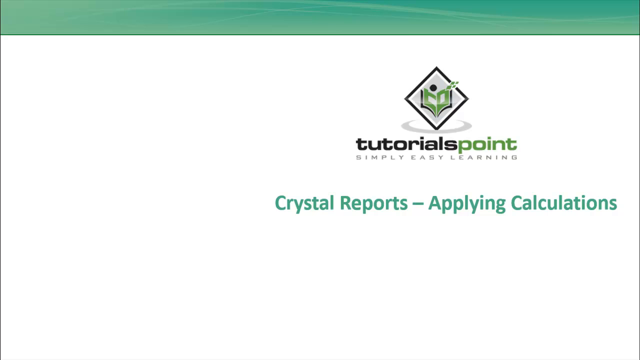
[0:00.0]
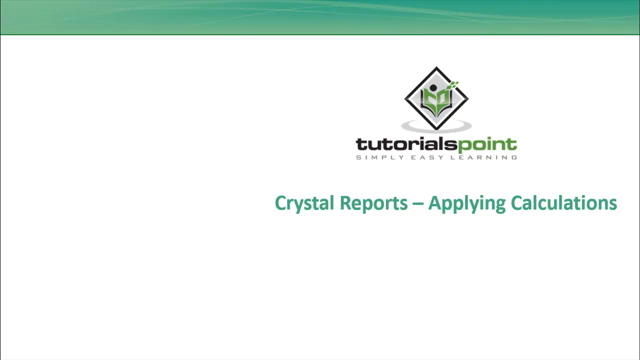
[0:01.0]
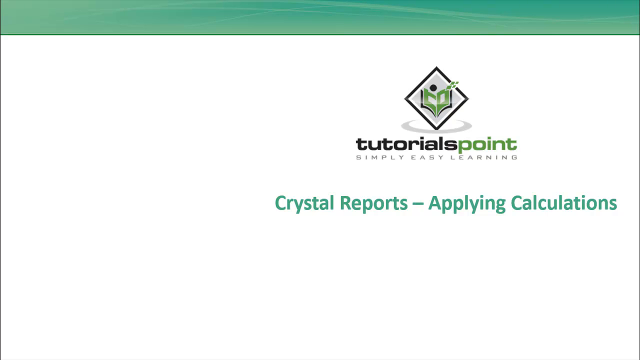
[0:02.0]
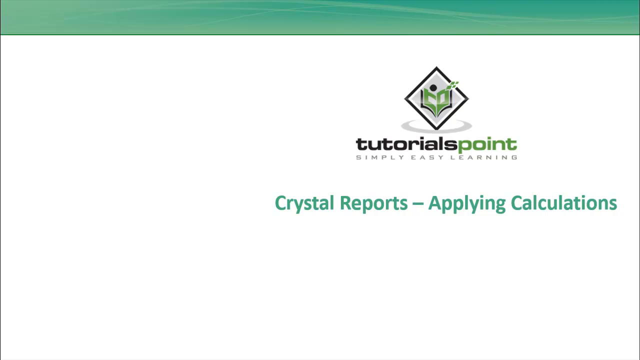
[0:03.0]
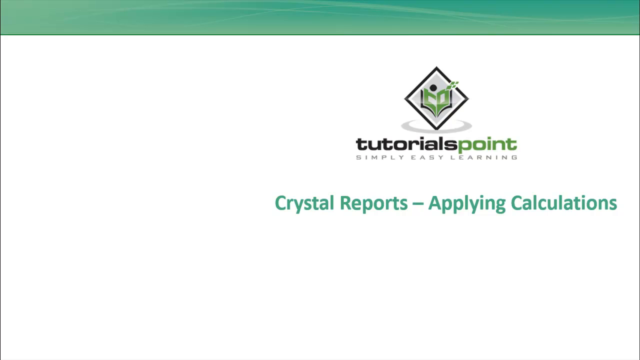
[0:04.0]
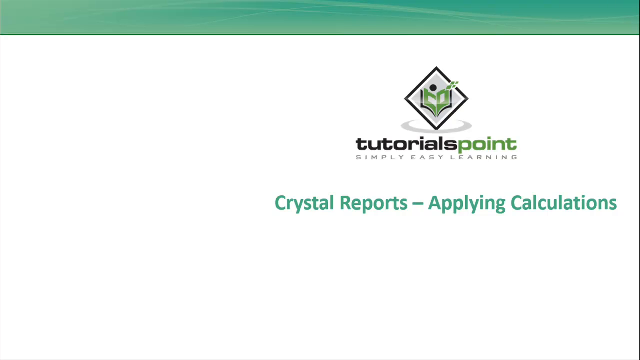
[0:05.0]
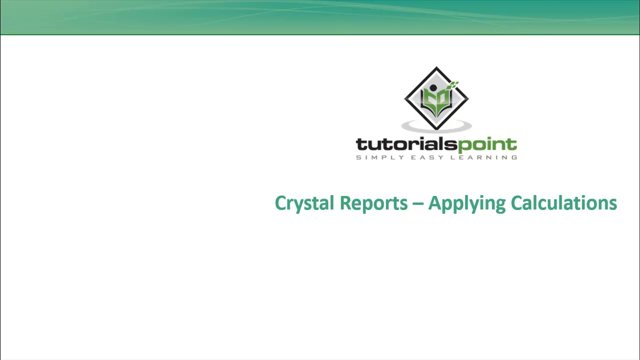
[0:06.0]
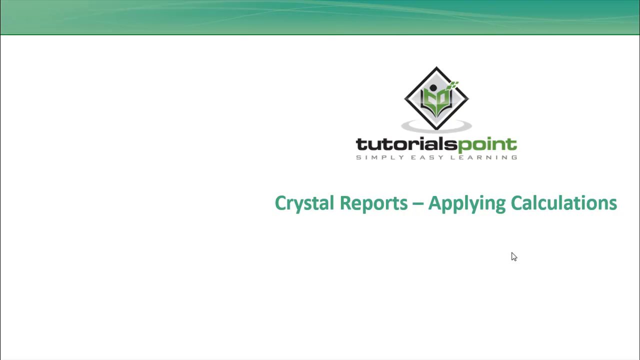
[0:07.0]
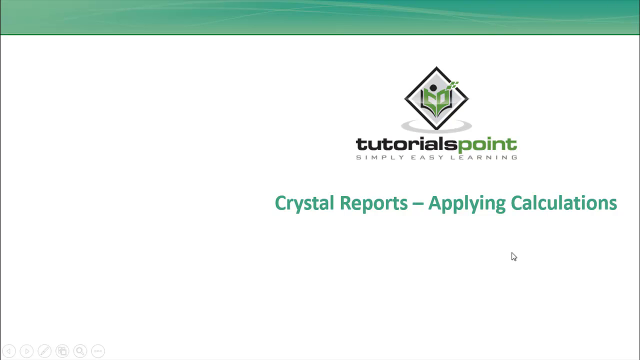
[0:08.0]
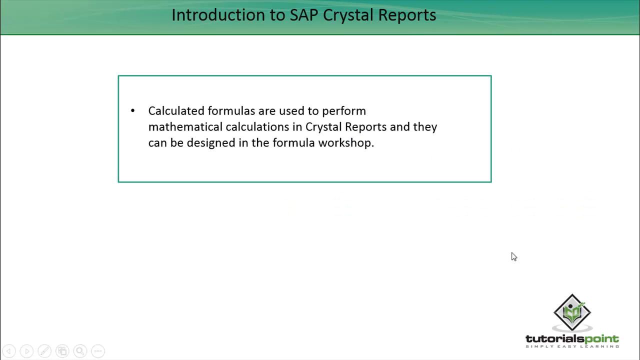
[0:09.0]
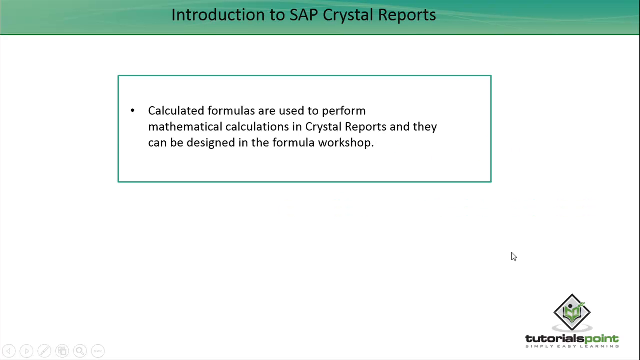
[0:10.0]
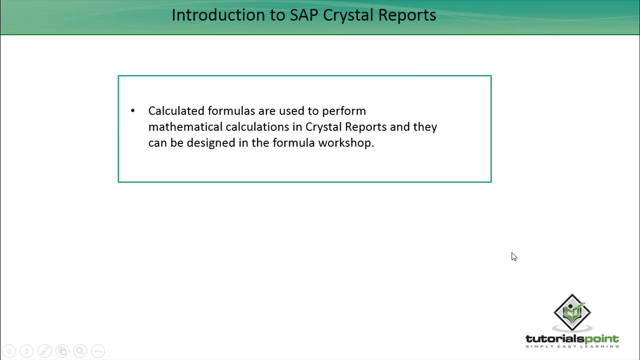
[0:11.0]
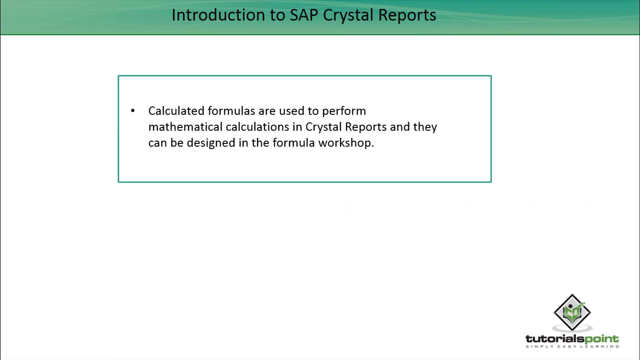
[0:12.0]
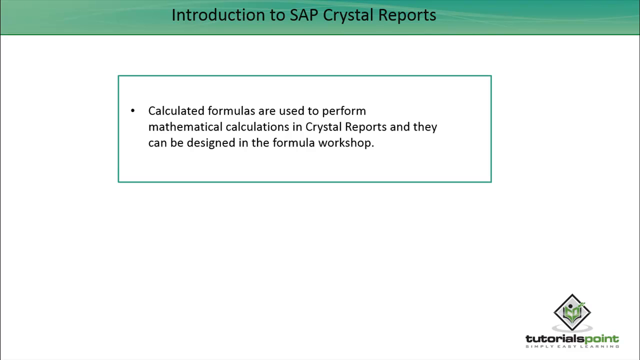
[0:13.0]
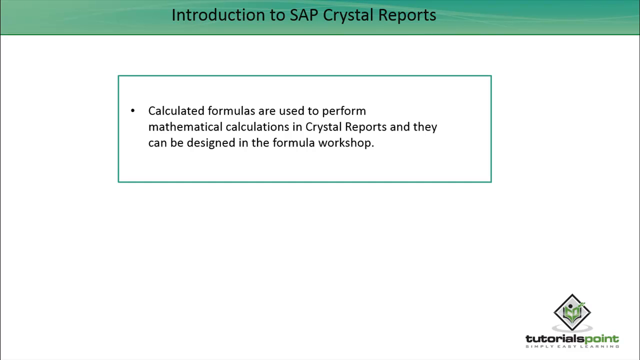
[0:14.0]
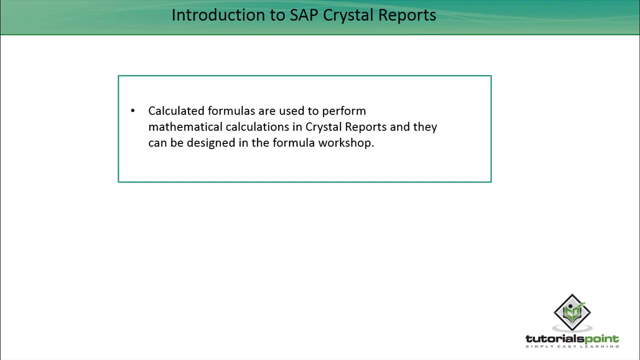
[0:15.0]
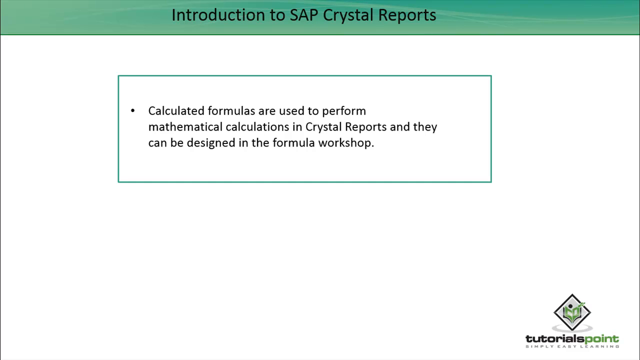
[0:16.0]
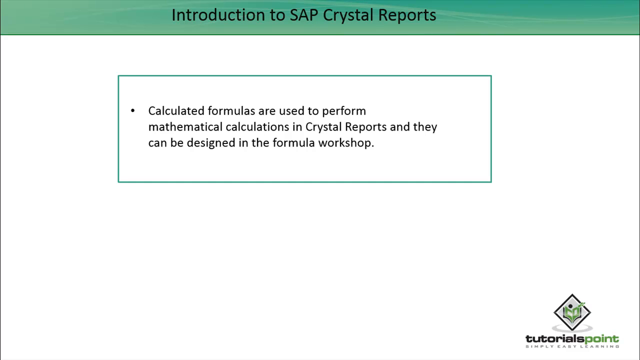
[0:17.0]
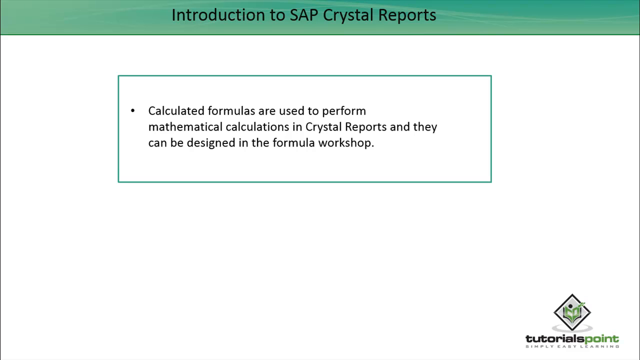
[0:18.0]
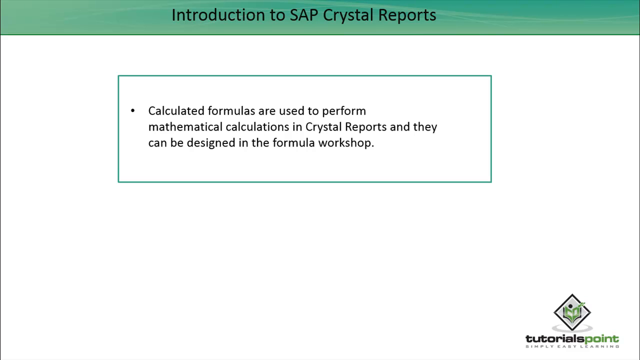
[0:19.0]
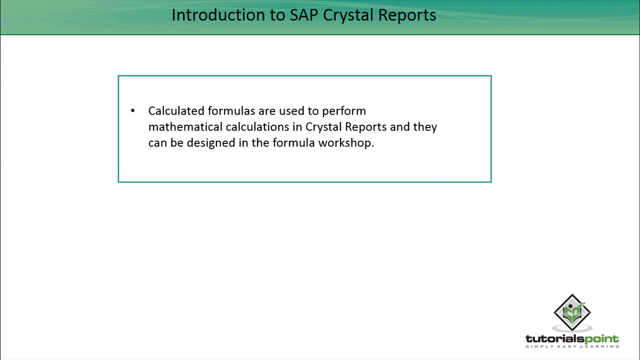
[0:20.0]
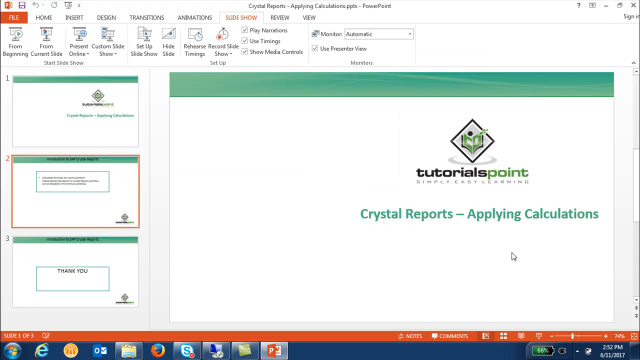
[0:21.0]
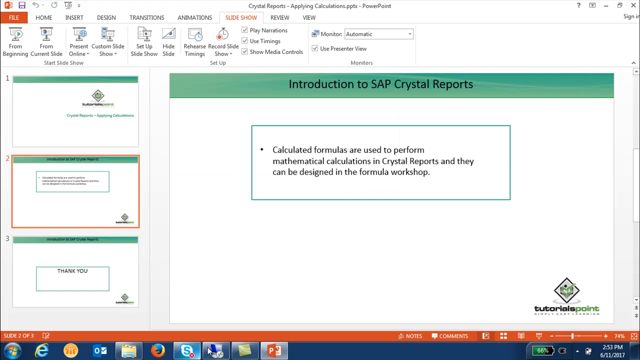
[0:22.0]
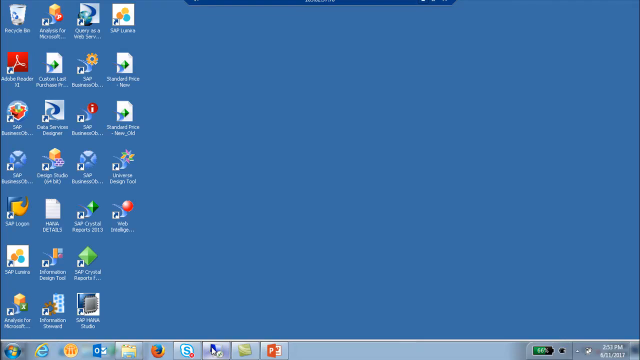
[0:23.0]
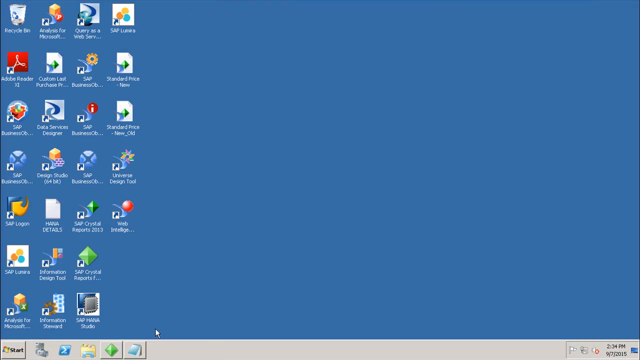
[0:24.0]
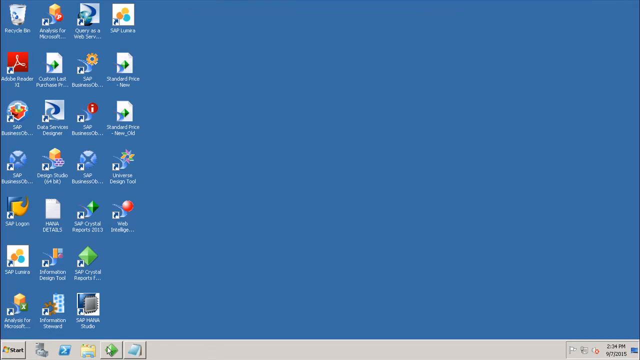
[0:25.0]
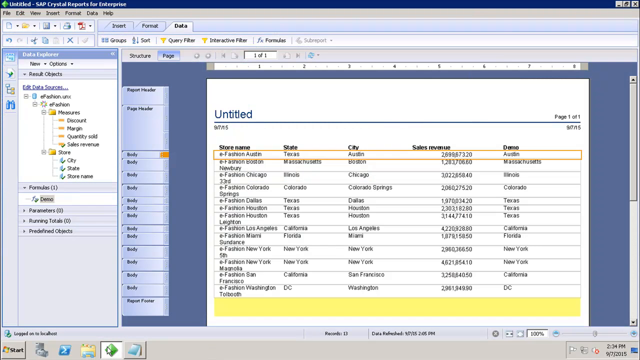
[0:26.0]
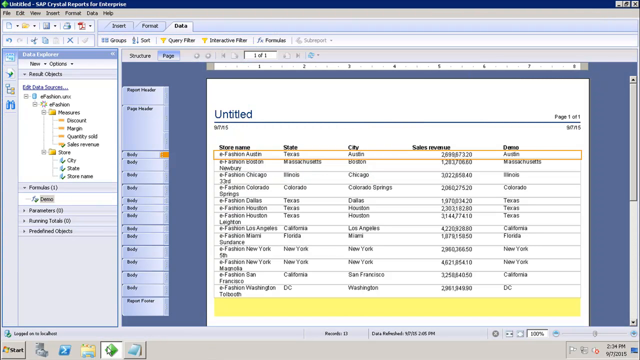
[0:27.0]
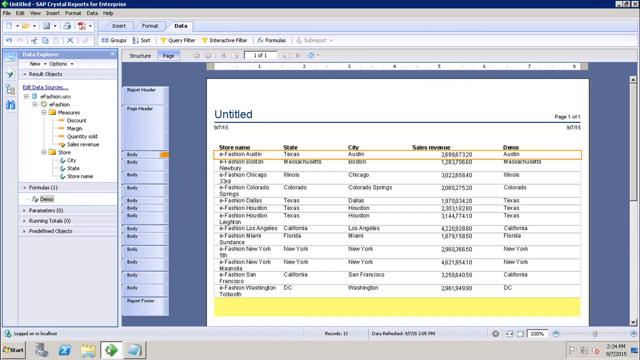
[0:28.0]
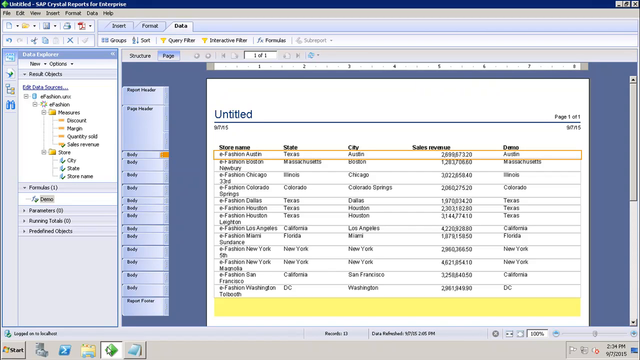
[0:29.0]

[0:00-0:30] A green border runs along the top of the frame against a white background. There appears to be a logo resembling an open green book. Text reads "tutorials" in black followed by "point" in green, and beneath it apparently "simply easy learning." Green text then reads "crystal reports - applying calculation." This stays on screen for a short time, after which black text in the green border at the top reads "introduction to SAP Crystal Reports." Below it, black text beside a green rectangular bullet point reads "calculator formulas are used to perform mathematical calculations in Crystal Reports and they can be designed in the formula workshop." The view then switches out, revealing that this is a PowerPoint presentation. The mouse appears to move over and minimize the PowerPoint, and another document seems to come up; it is untitled and shows page one of one.